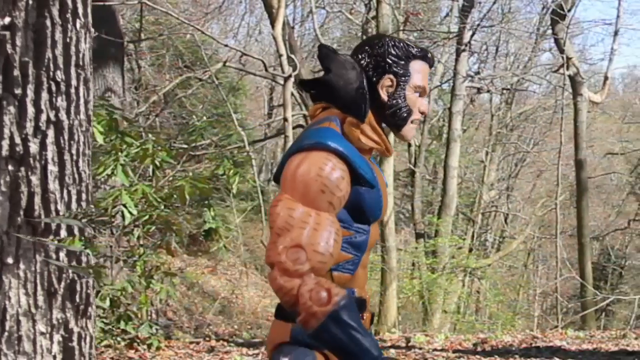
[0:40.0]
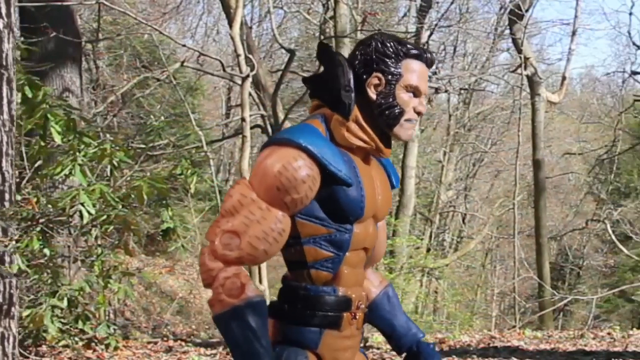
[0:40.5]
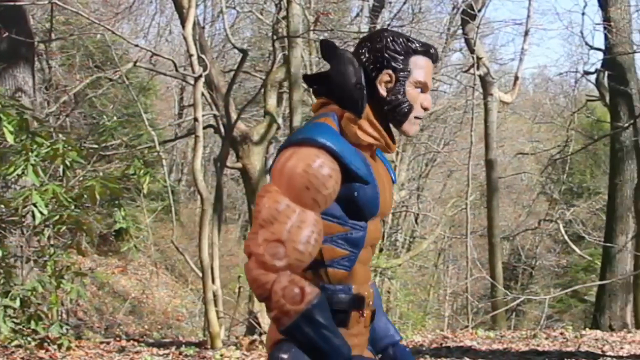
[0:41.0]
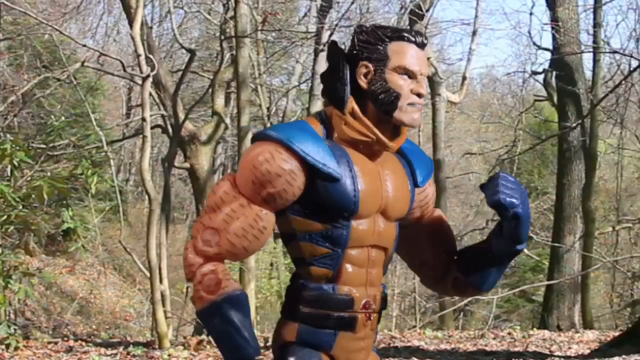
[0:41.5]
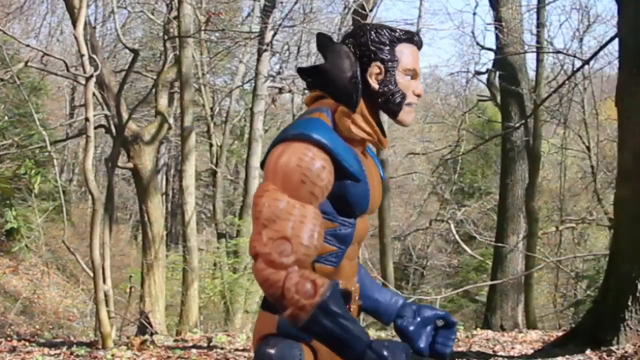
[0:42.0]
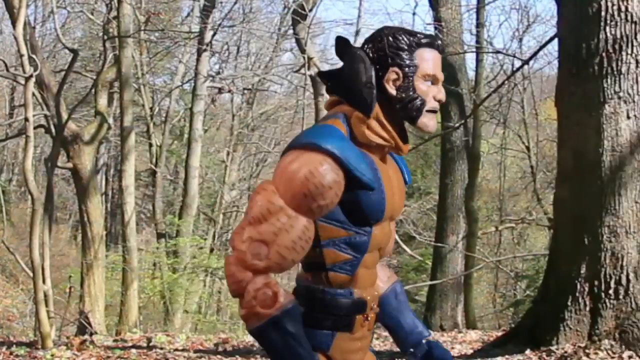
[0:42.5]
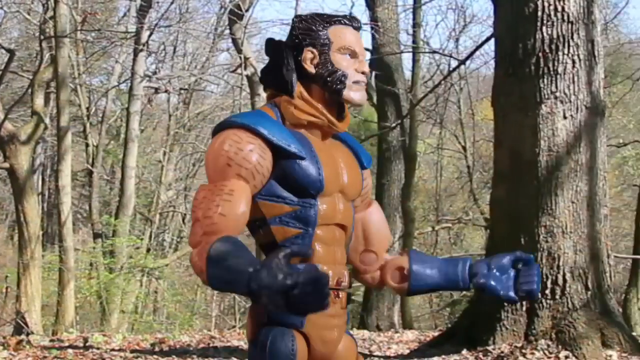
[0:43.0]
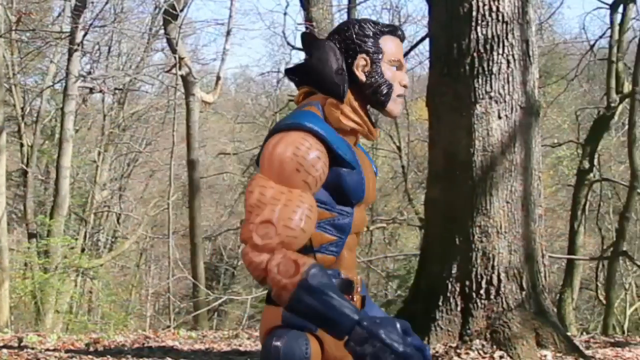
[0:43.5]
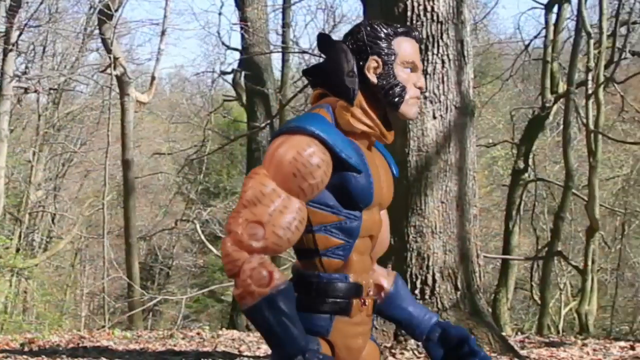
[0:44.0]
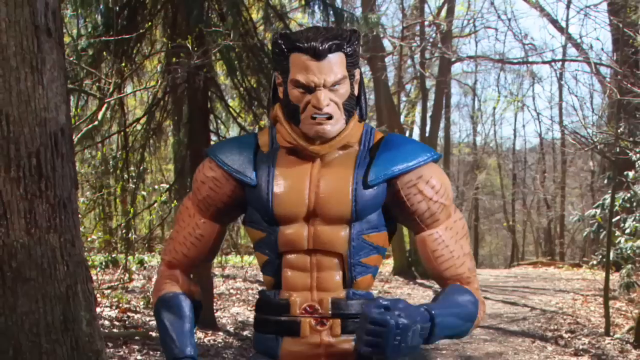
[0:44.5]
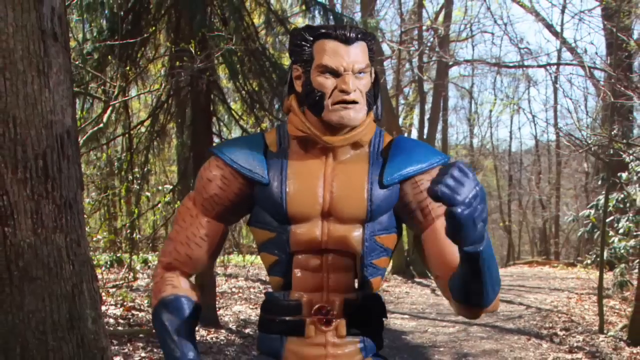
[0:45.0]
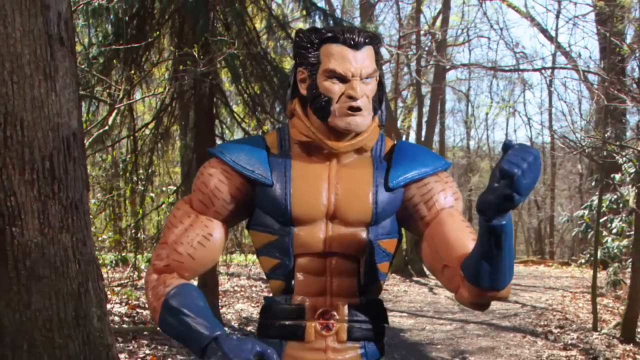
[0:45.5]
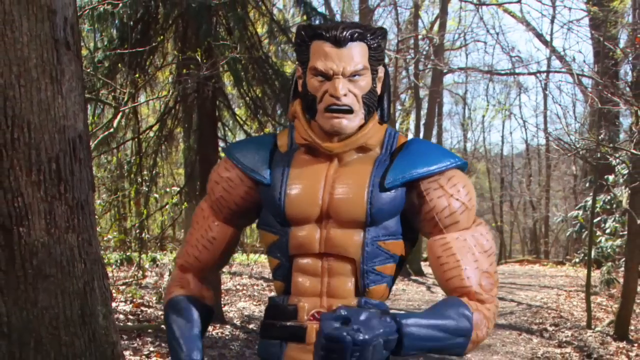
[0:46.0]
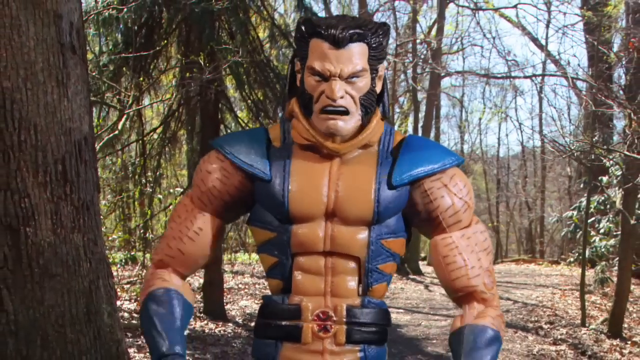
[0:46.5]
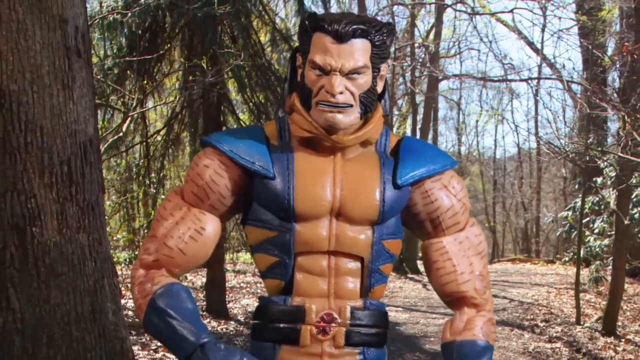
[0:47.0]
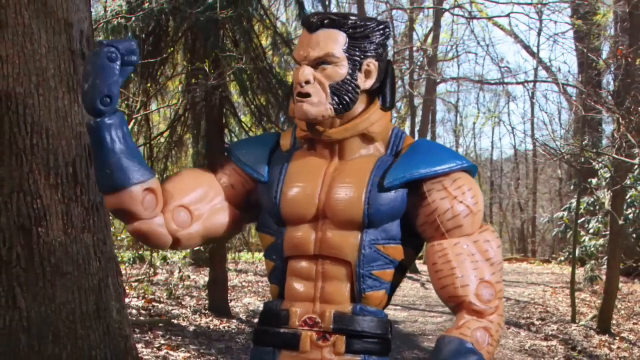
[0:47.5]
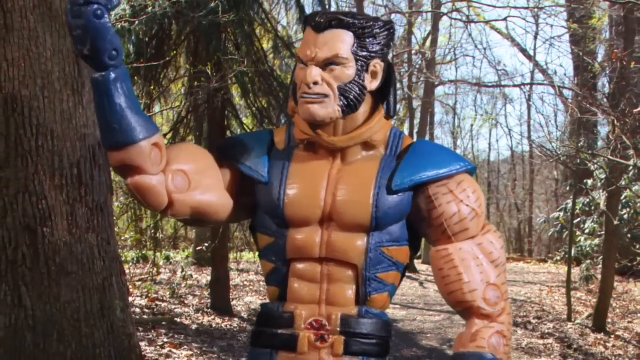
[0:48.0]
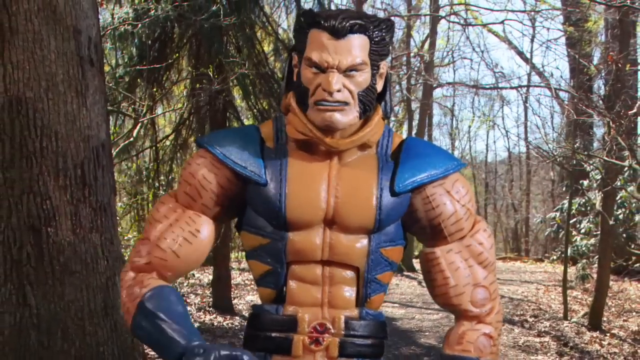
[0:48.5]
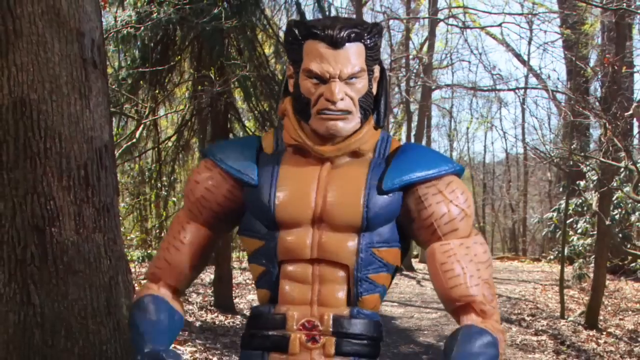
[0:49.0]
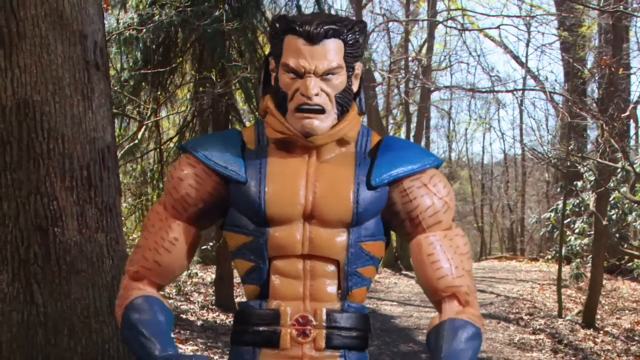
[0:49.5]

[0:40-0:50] A Marvel hero with black hair and long sideburns running into a bit of a beard walks through a real forest. He looks very angry in the way he walks, carries his body and holds up his hands, first the right one, then the left. He is speaking, apparently in a really gruff way. The other characters are not around. There is a blue sky, tree trunks and some green leaves, though the trees are mostly bare, and sunlight comes through, casting shadows of branches and trees on the ground and on other trees.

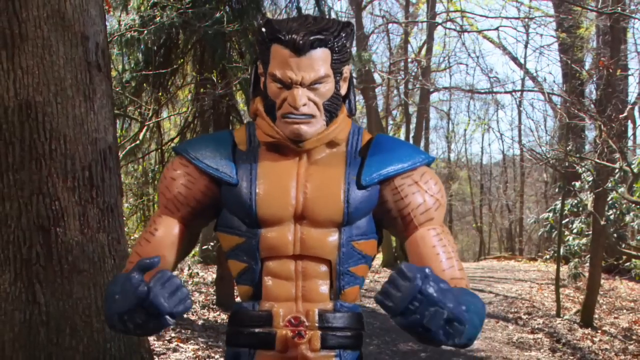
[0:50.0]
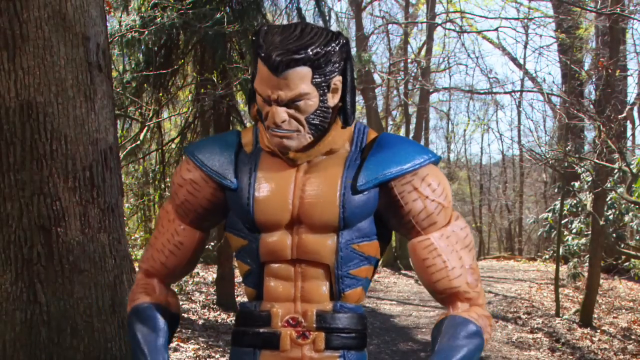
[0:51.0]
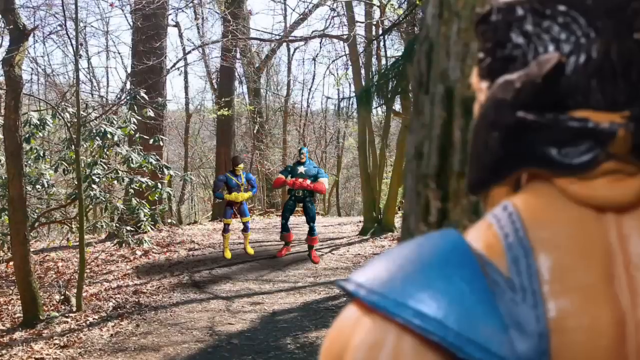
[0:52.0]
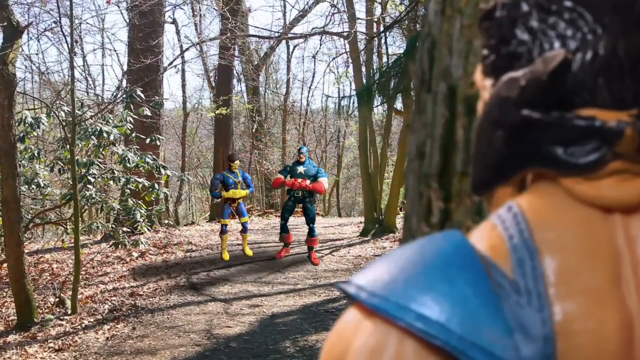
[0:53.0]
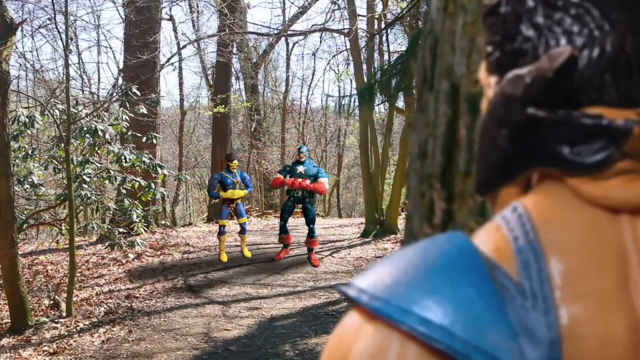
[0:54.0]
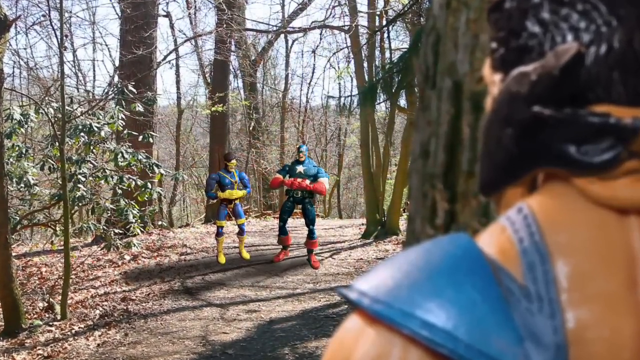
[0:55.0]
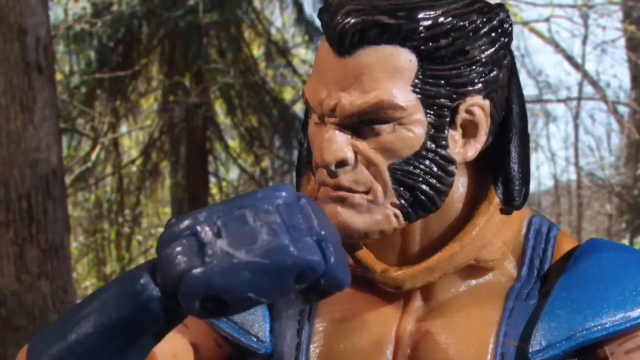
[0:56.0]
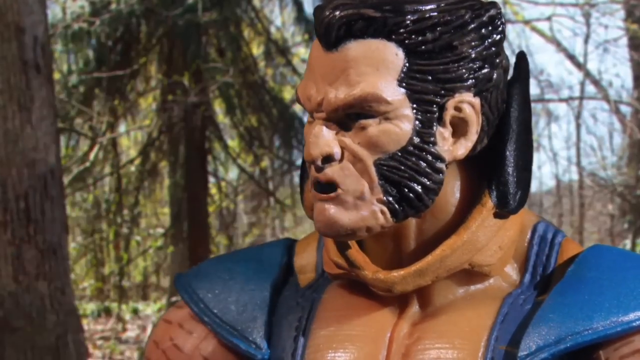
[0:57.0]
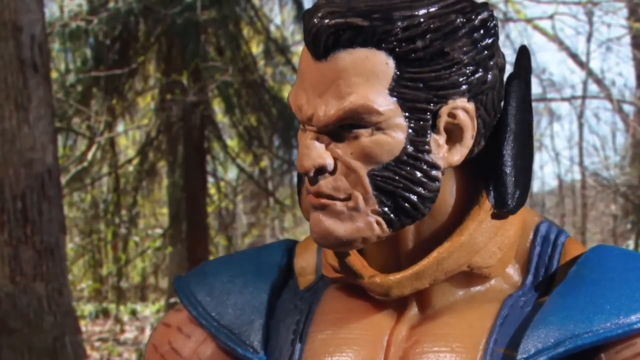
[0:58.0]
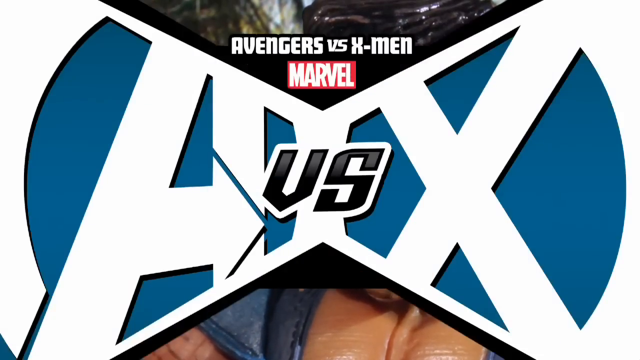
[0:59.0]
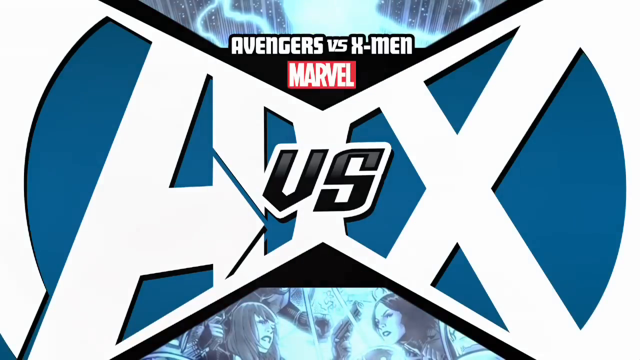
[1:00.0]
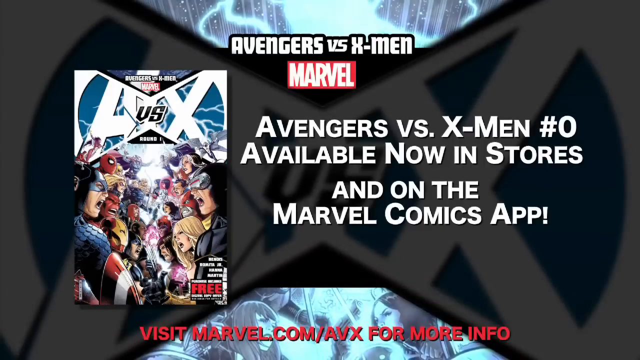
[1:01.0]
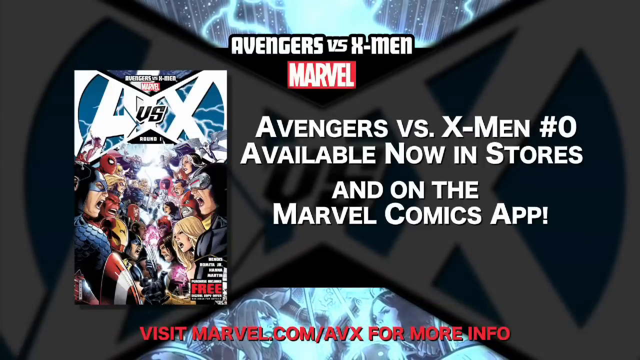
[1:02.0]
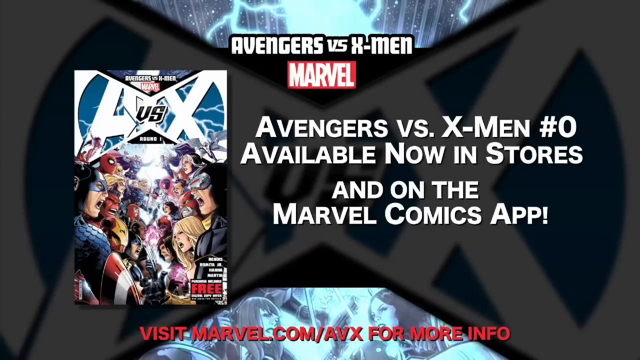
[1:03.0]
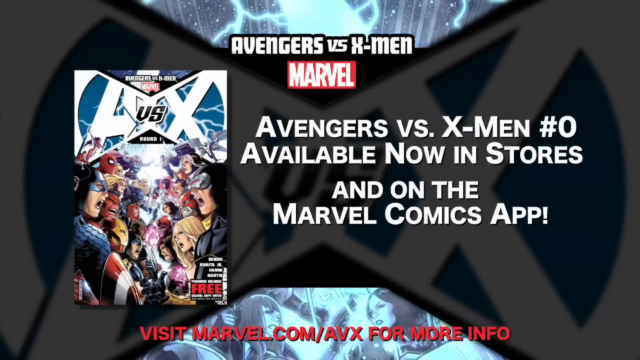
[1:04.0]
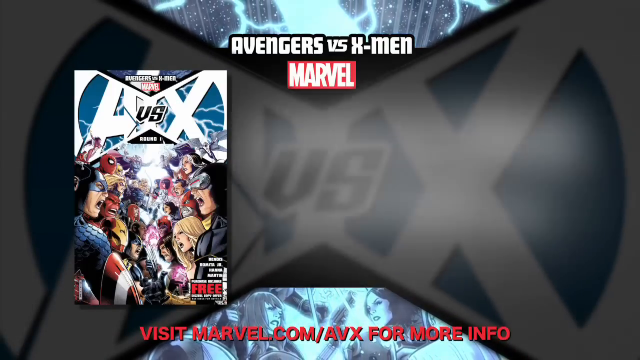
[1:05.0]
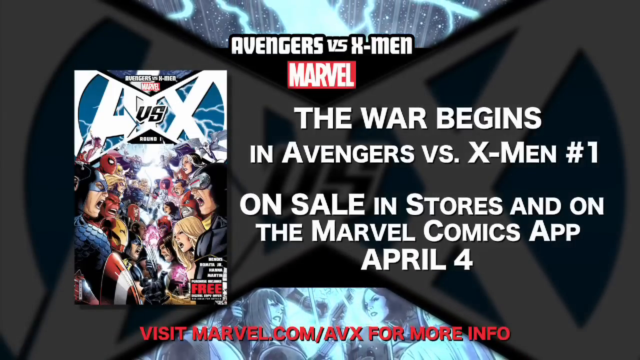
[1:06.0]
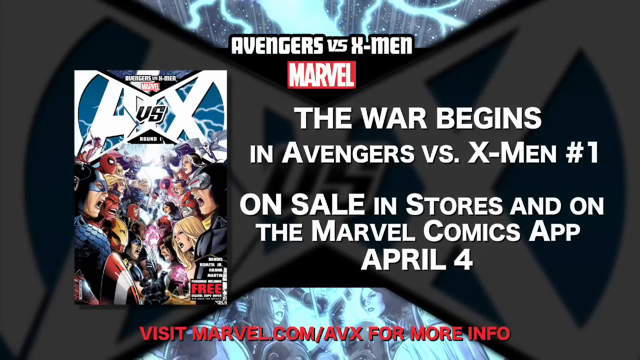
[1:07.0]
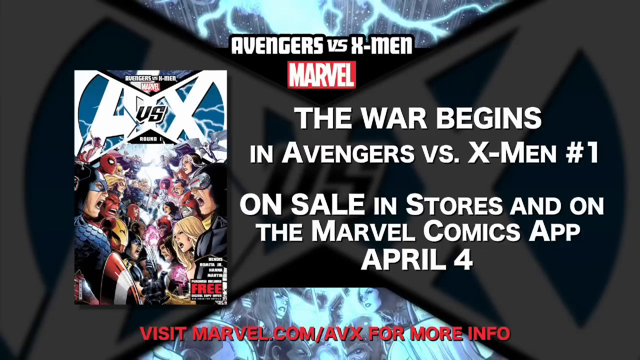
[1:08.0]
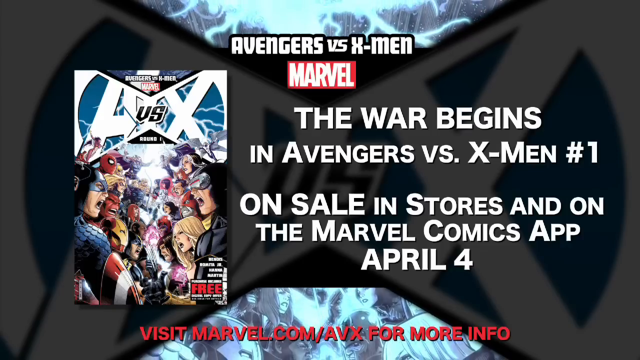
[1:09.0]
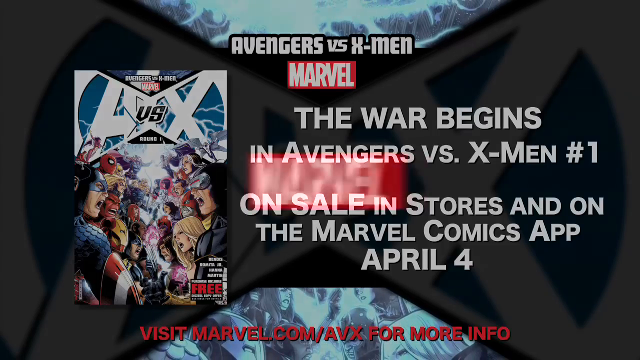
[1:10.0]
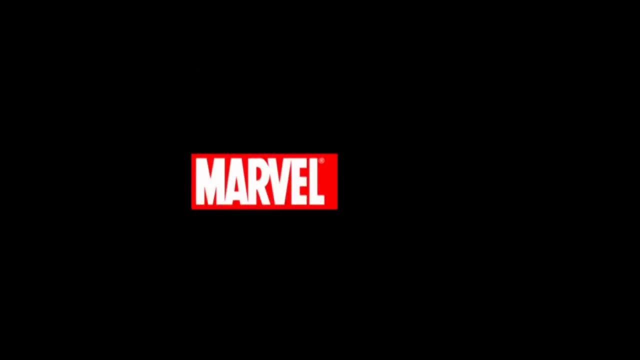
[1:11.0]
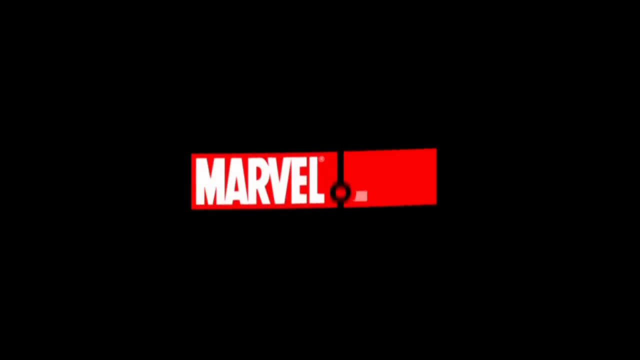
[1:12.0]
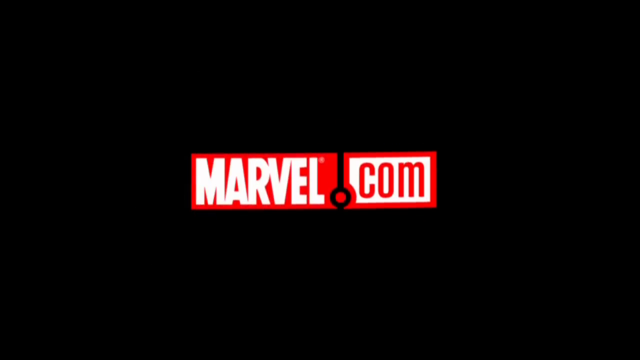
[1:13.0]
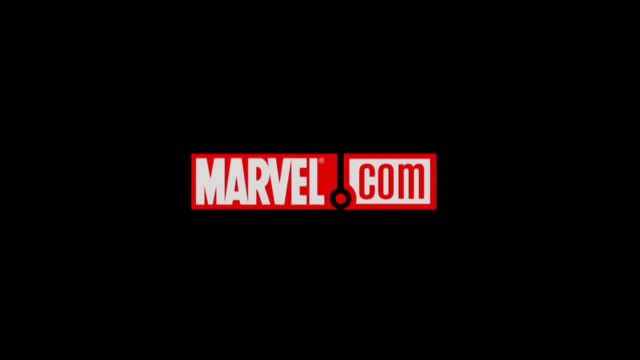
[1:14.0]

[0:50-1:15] The Marvel character, very muscular, in a flesh-colored suit with a blue vest, black hair and very long sideburns that kind of form a beard on his cheeks, walks through a forest and meets two other characters. One is the Marvel character with the star on his chest, carrying something red in his hands; the other Marvel character has something yellow in his hands. He speaks to them quickly and sternly and is visibly very upset. Then a screen reads "Avengers vs. X-Men Marvel". It shows "AX" in white on a blue background, with something like a white cross in the middle and "US" in black in the middle.